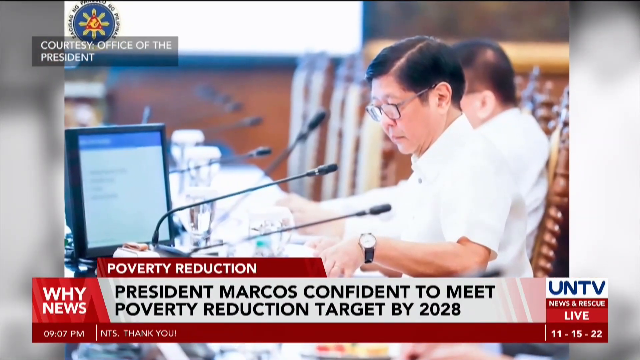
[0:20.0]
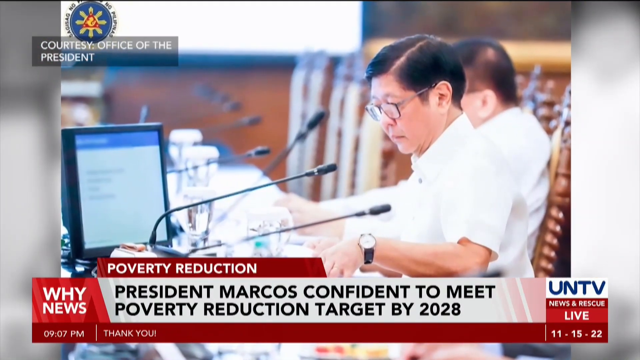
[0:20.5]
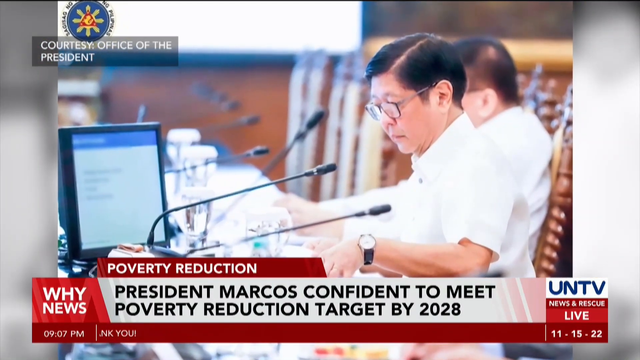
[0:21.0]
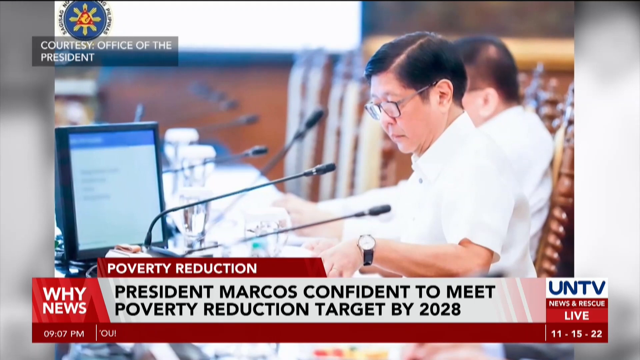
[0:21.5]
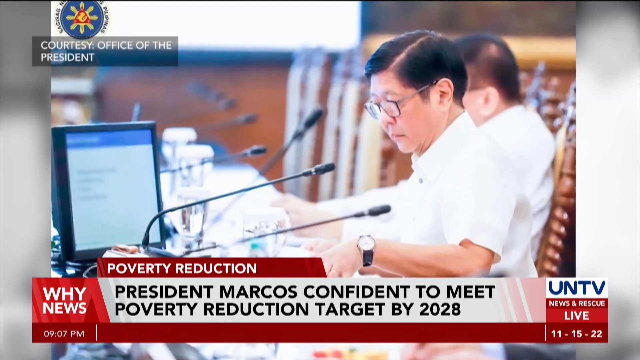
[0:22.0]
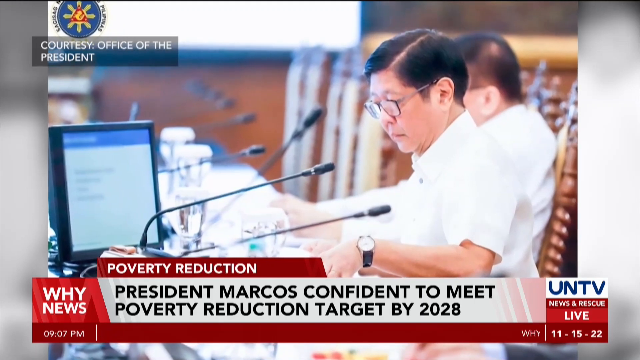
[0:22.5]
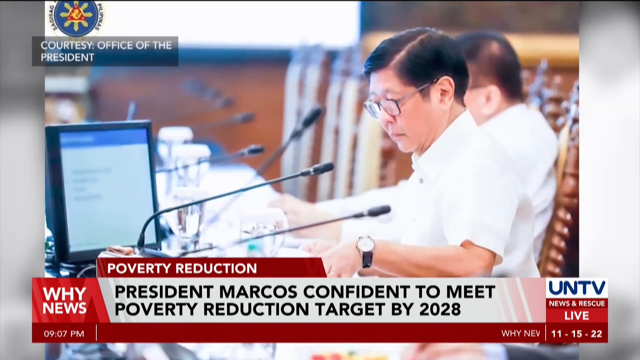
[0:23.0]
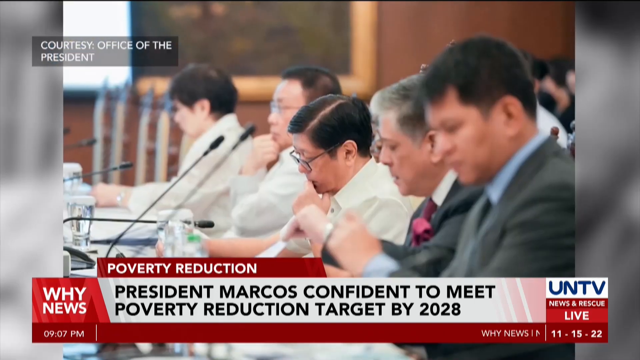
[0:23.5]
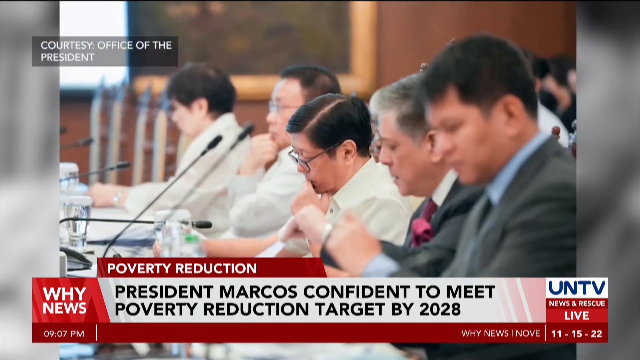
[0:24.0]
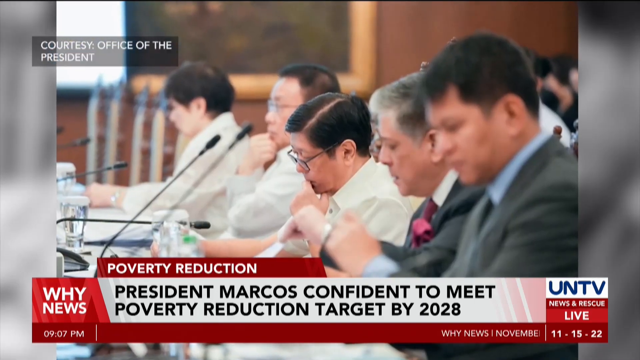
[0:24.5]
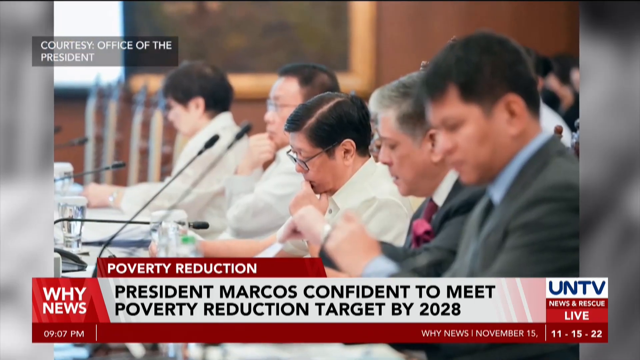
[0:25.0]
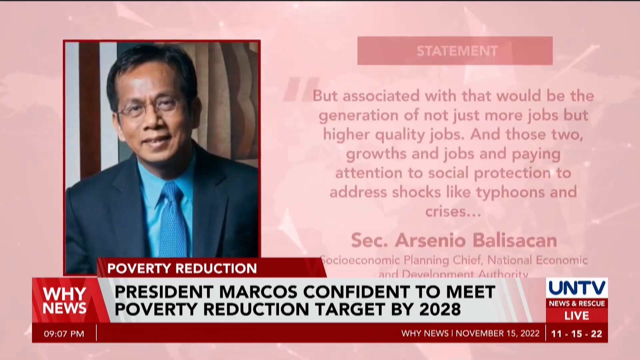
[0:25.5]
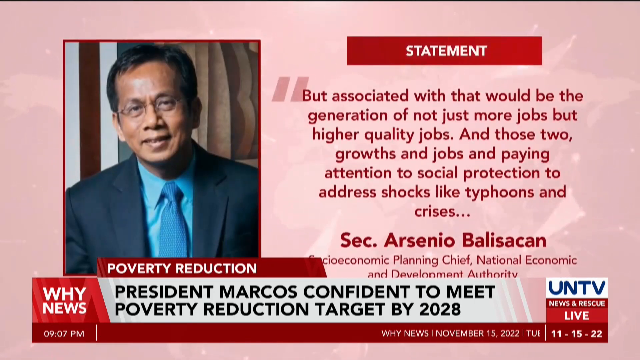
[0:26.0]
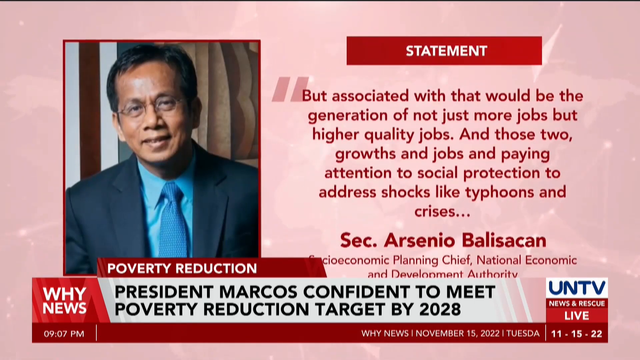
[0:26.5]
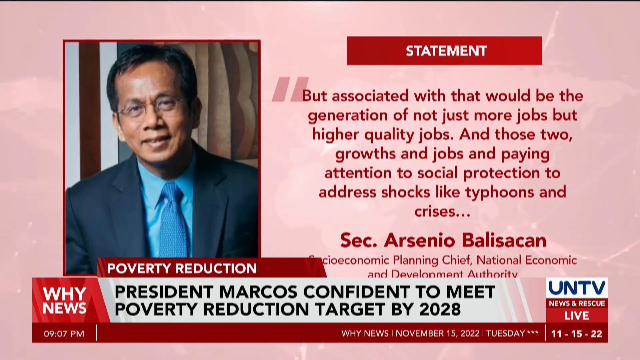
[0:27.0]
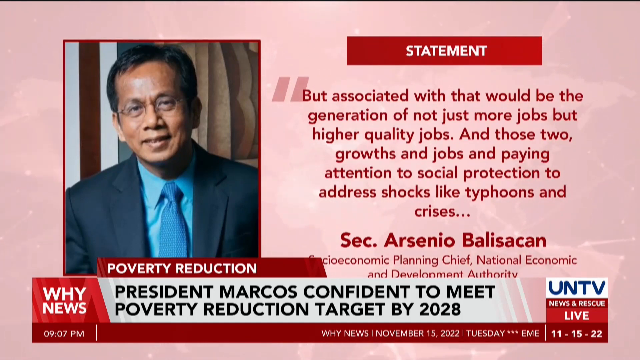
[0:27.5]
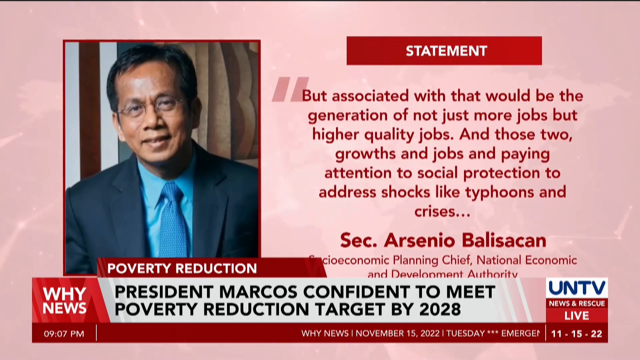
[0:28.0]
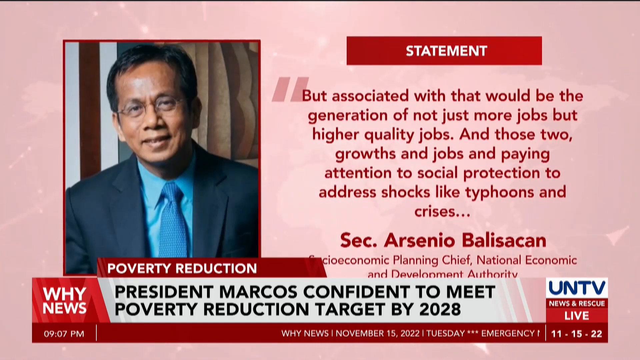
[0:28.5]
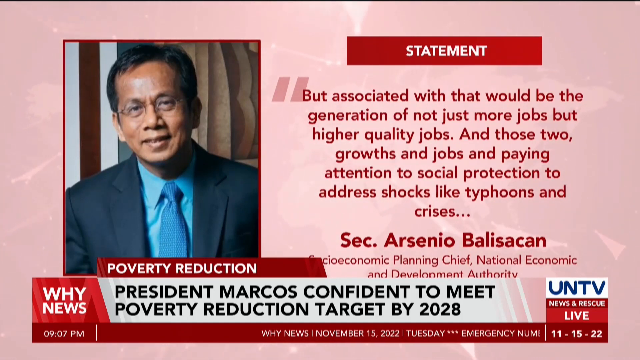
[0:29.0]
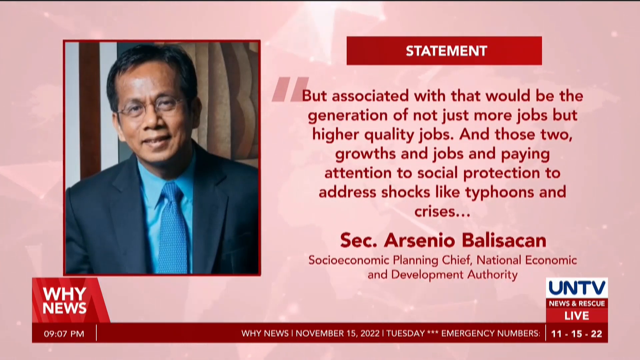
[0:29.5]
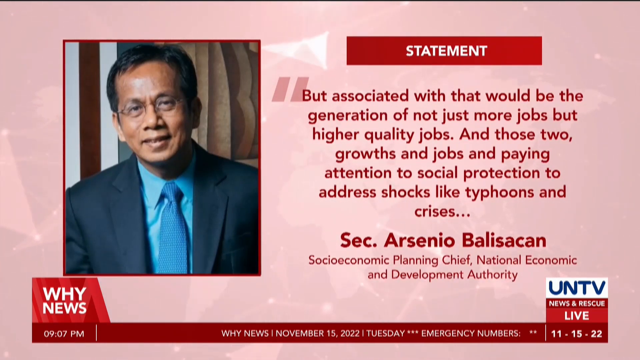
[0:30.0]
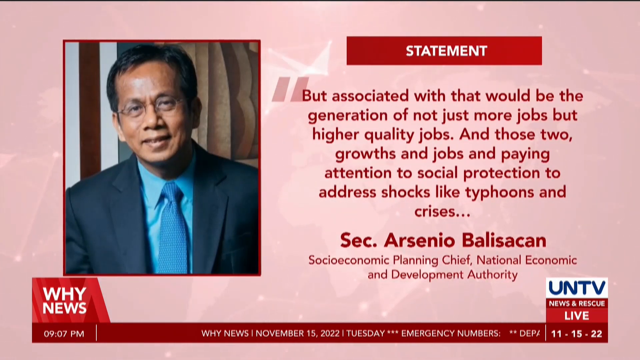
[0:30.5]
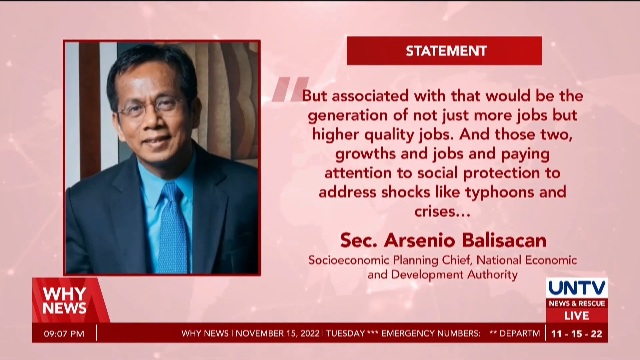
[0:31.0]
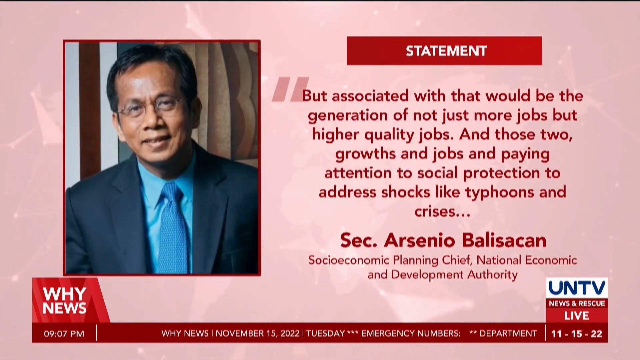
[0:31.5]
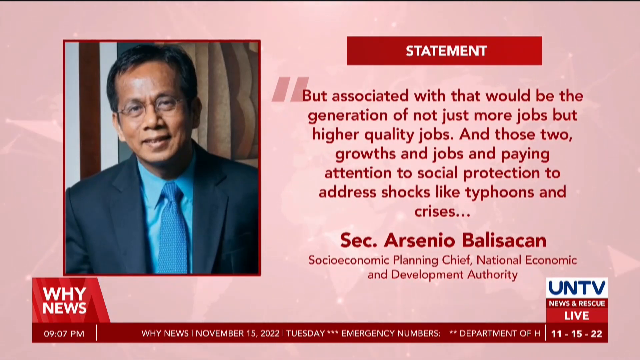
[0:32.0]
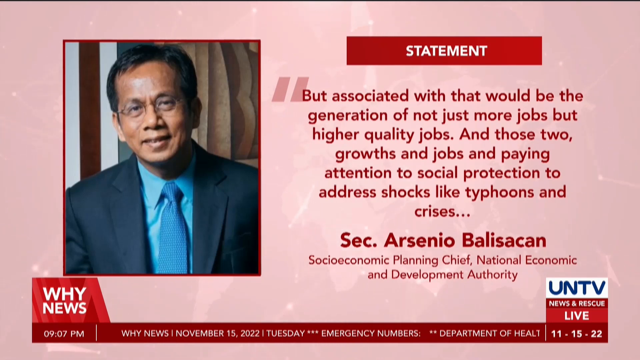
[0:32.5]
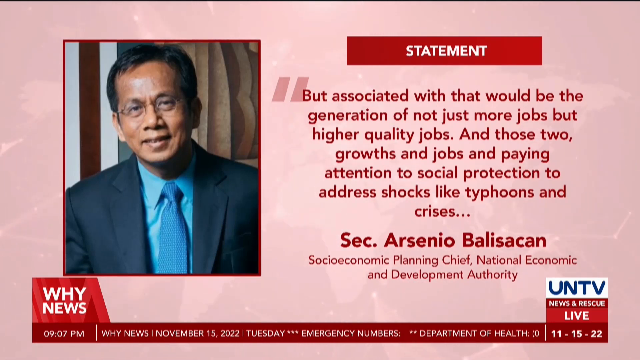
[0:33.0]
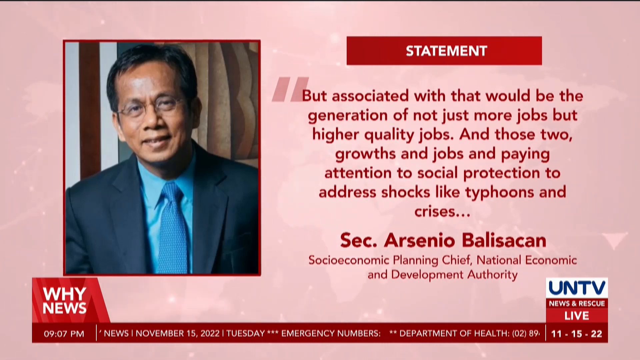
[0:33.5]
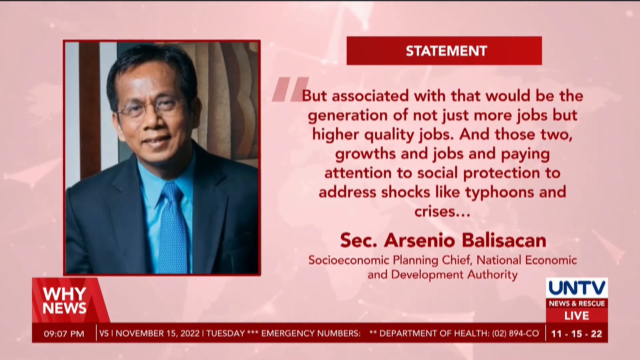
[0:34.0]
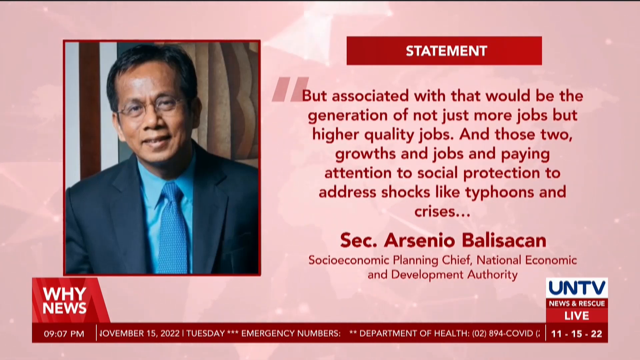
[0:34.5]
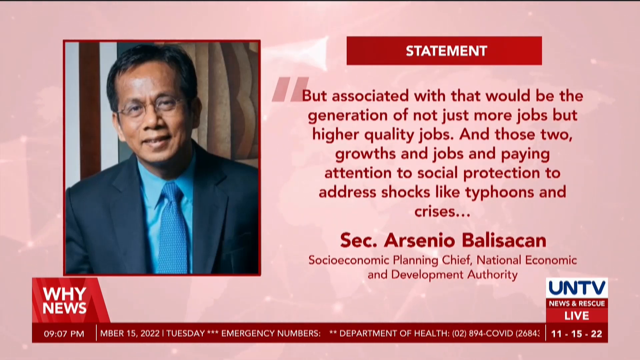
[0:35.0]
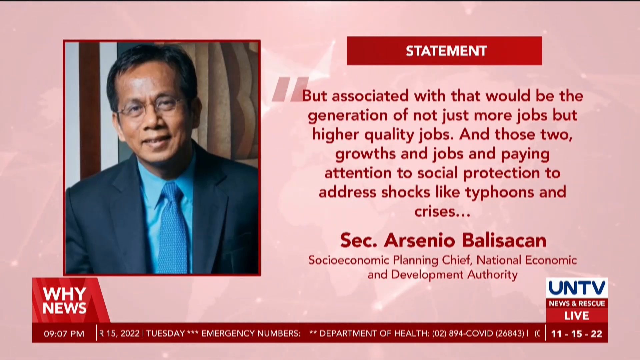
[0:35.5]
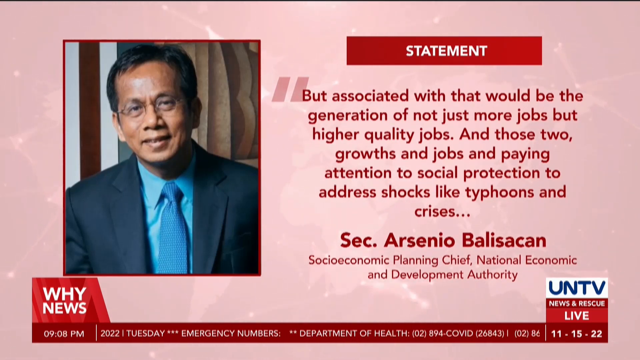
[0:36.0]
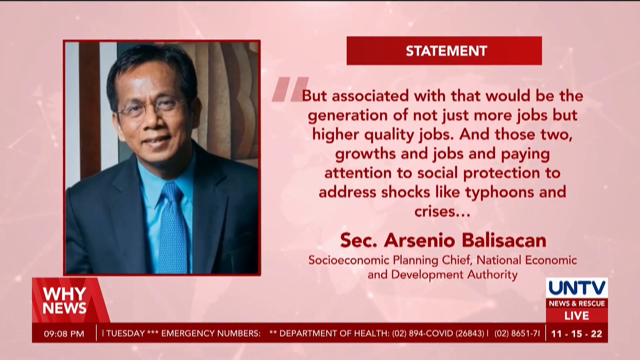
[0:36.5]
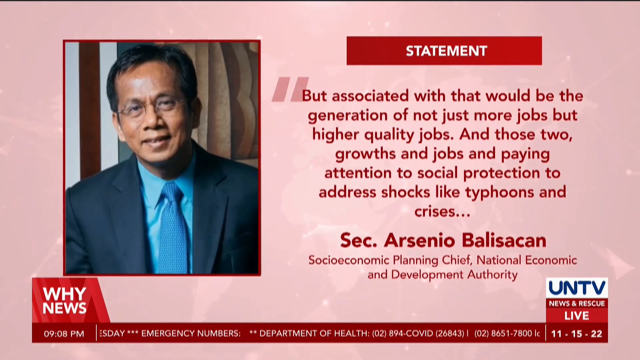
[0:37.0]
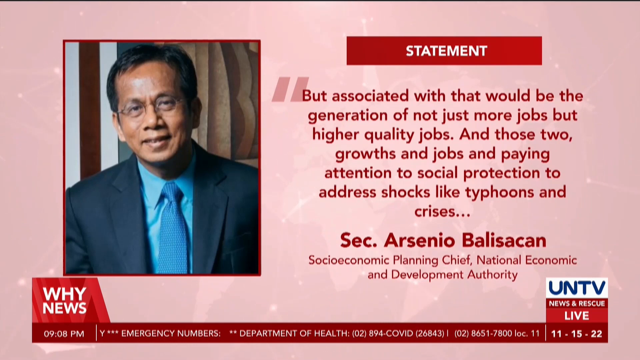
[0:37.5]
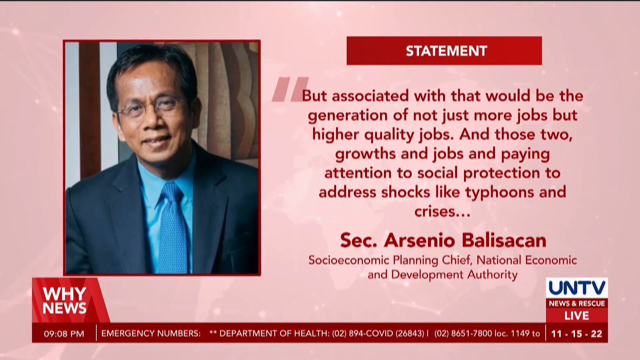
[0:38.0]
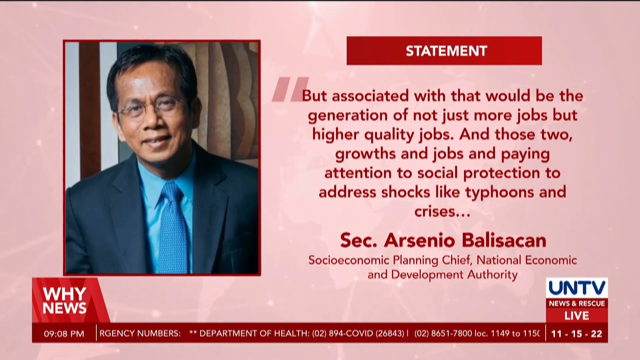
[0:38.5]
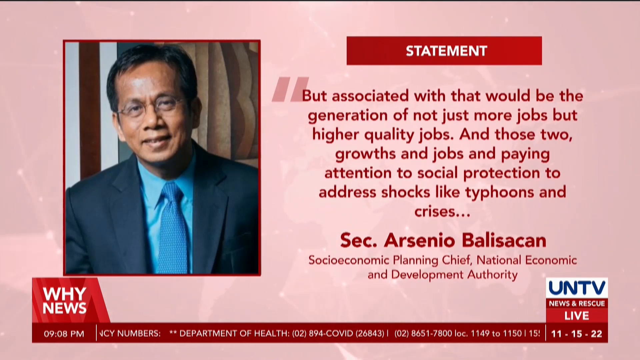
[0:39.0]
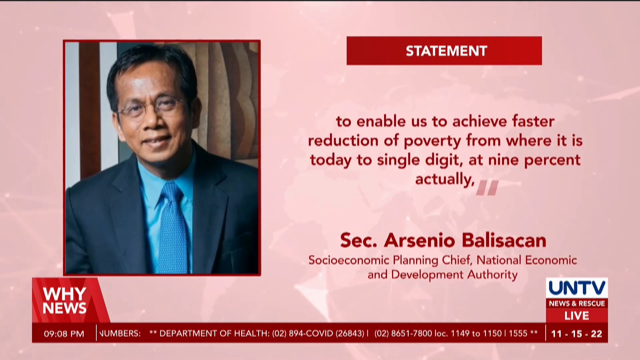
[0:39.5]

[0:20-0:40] Various shots show people in a conference room conversing and deliberating; they look very serious, as if trying to tackle a situation. After a while, a picture appears on the screen with a statement that reads "what's associated with that would be the generation of not just more jobs, but higher quality jobs" and continues "and paying attention to social protection to address shocks like typhoons and crisis," attributed to "Secretary Arsenio Balissacan, socio-economic planning chief, National Economic and Development Authority." Beside the statement is a picture of a man, probably the person who made it, wearing a blue tie, a blue jacket and a blue shirt. After a while, the video moves back to the group of people in the conference room.